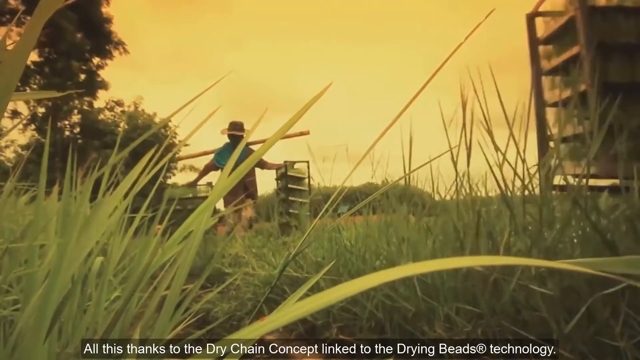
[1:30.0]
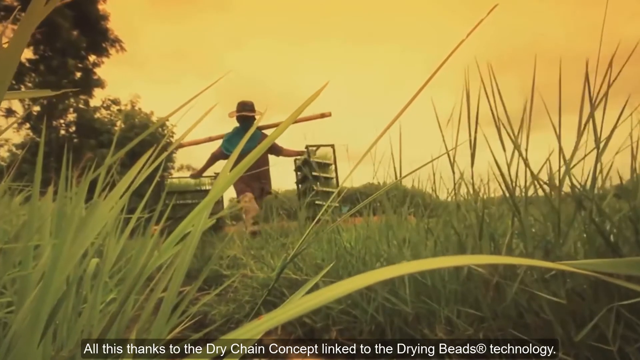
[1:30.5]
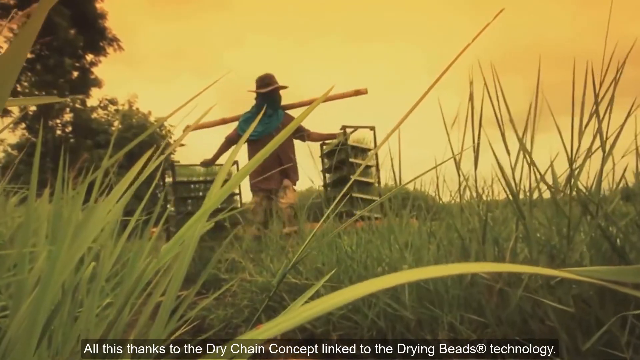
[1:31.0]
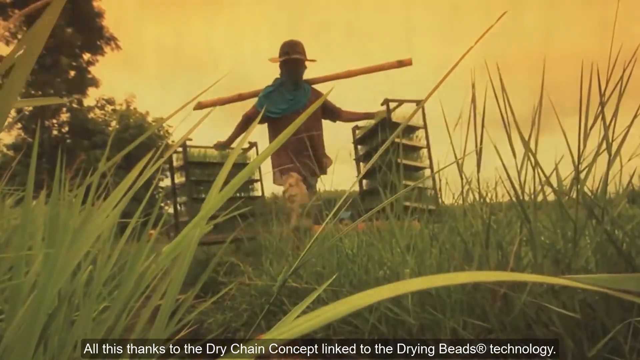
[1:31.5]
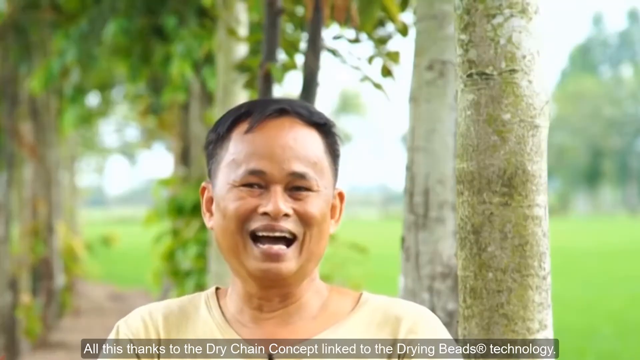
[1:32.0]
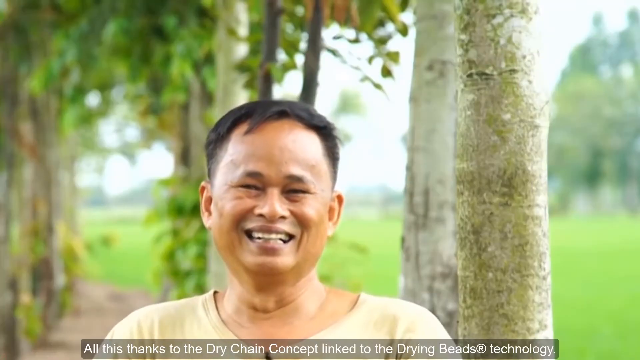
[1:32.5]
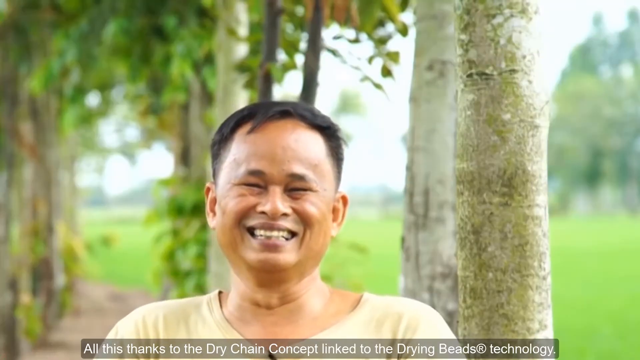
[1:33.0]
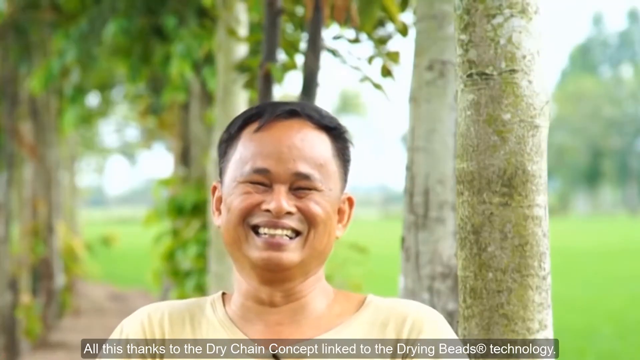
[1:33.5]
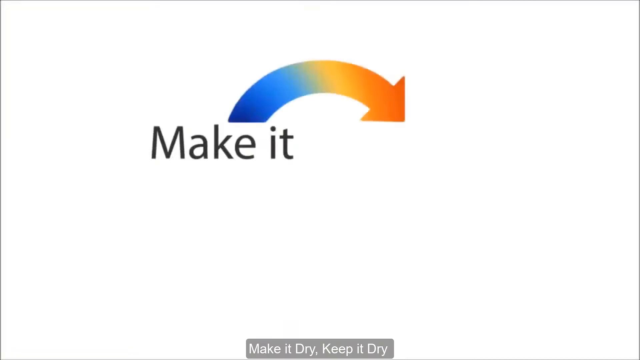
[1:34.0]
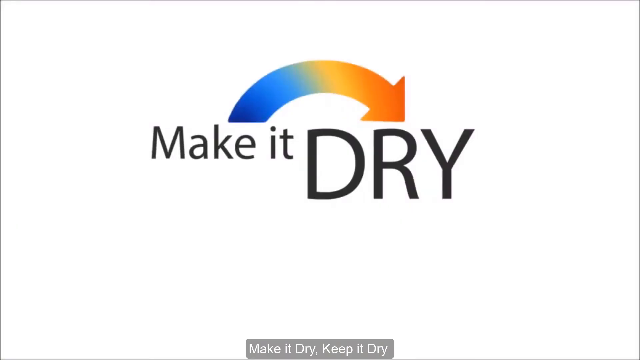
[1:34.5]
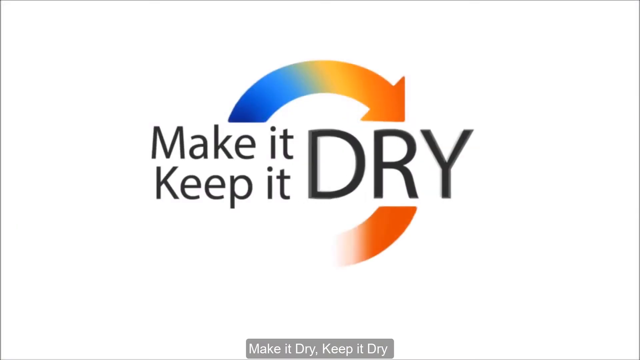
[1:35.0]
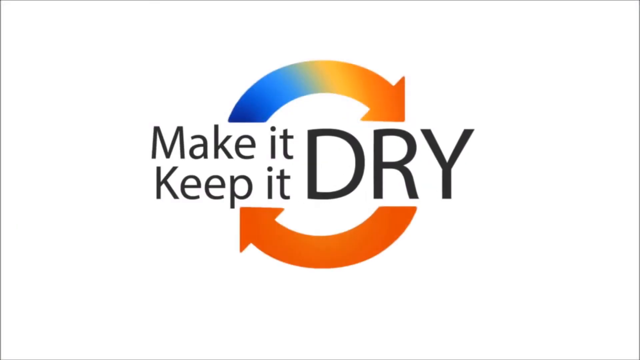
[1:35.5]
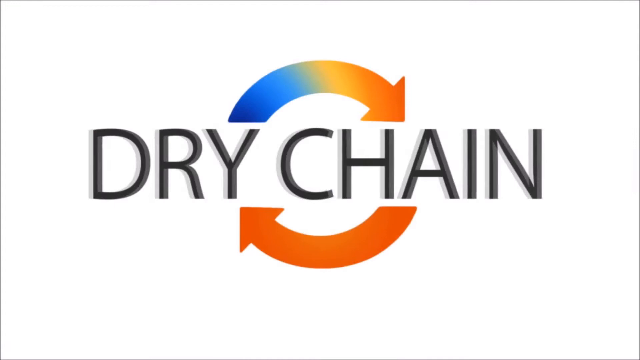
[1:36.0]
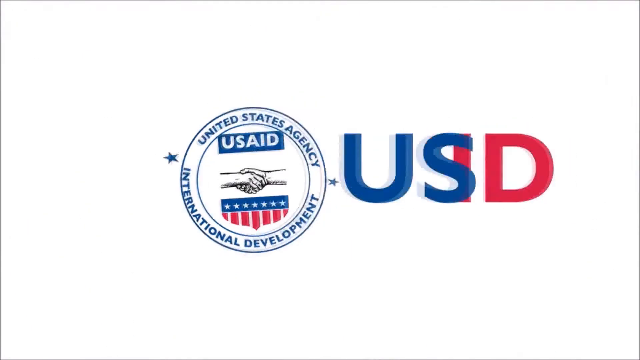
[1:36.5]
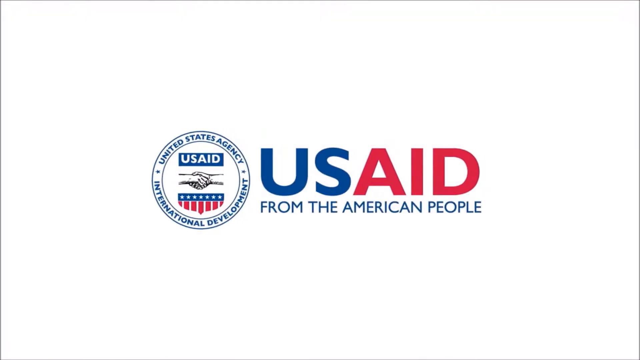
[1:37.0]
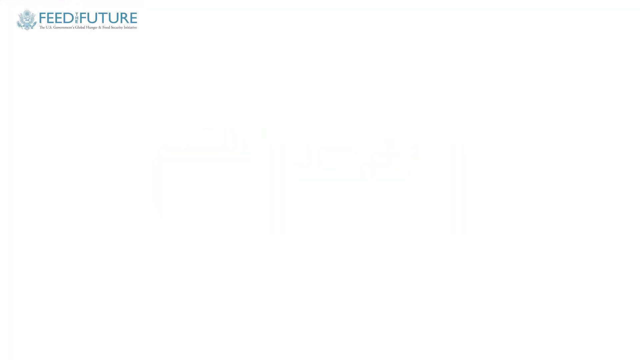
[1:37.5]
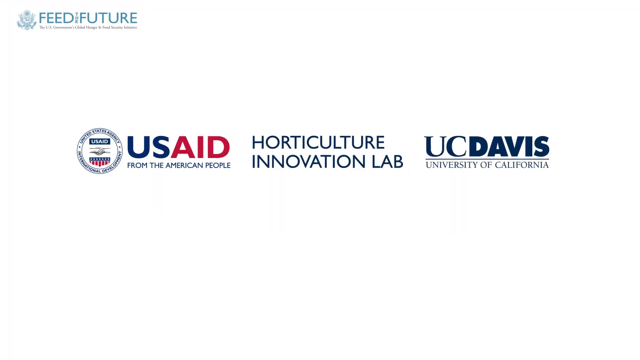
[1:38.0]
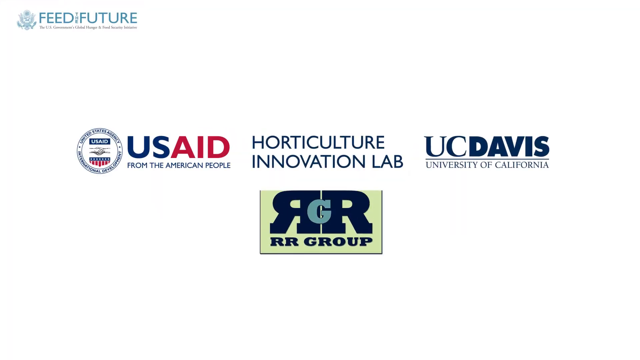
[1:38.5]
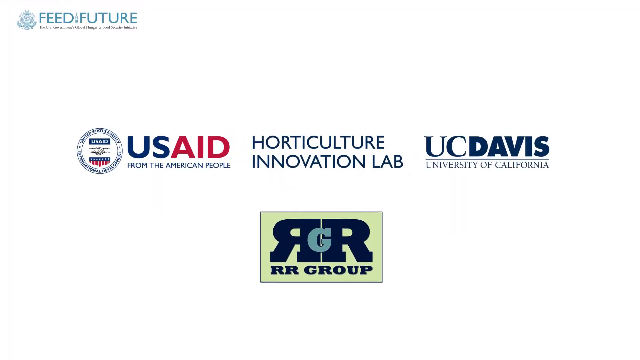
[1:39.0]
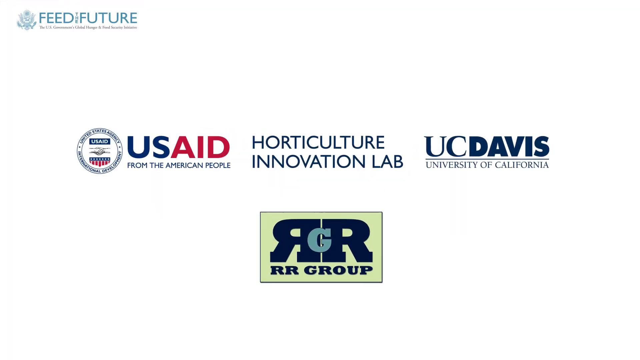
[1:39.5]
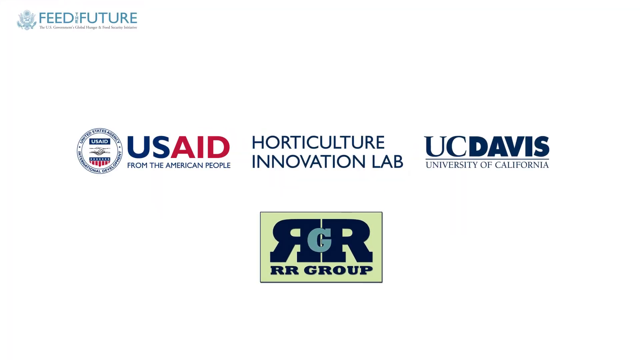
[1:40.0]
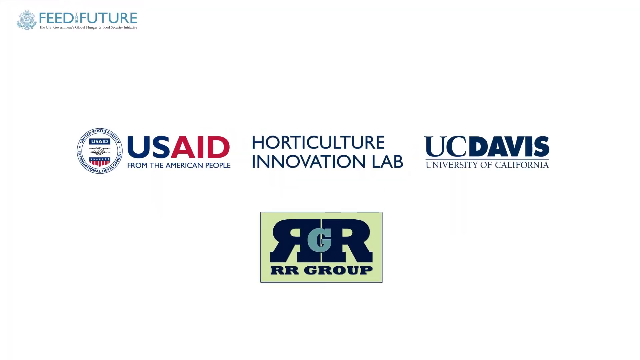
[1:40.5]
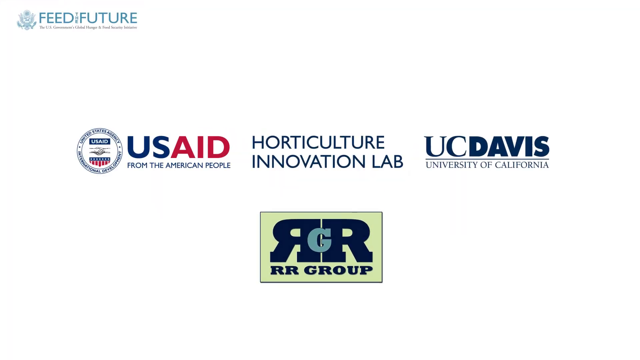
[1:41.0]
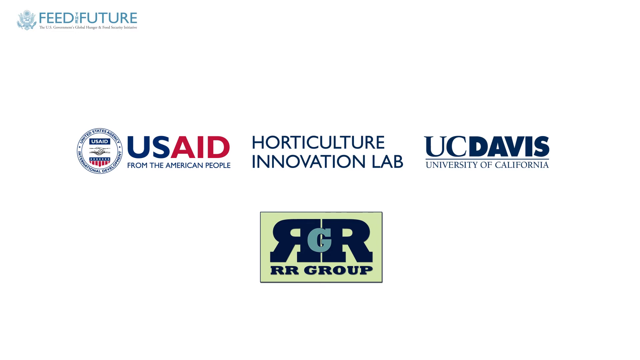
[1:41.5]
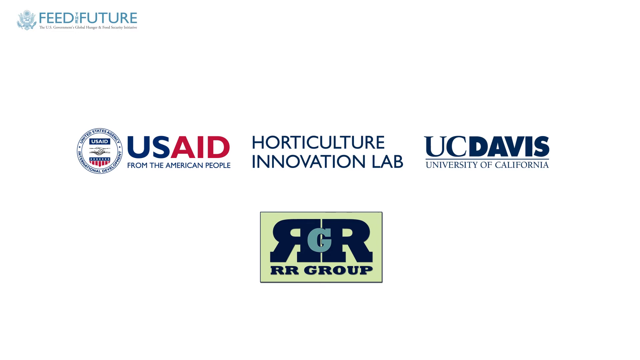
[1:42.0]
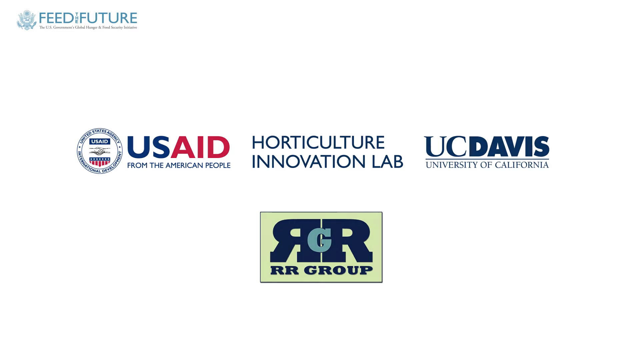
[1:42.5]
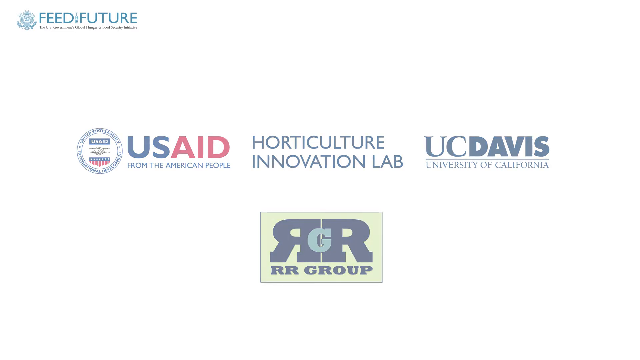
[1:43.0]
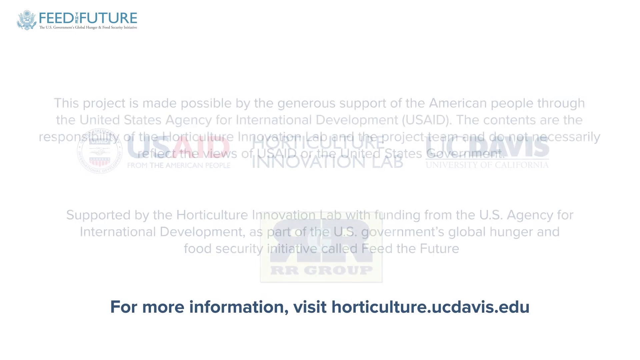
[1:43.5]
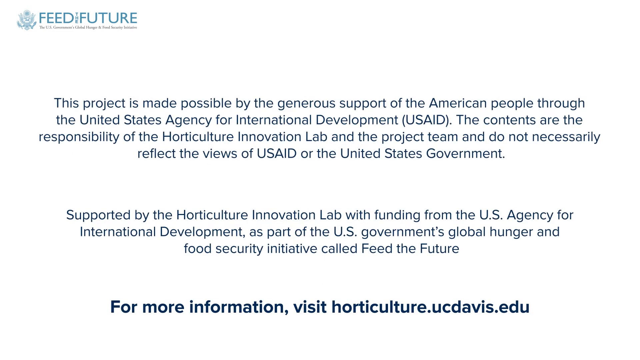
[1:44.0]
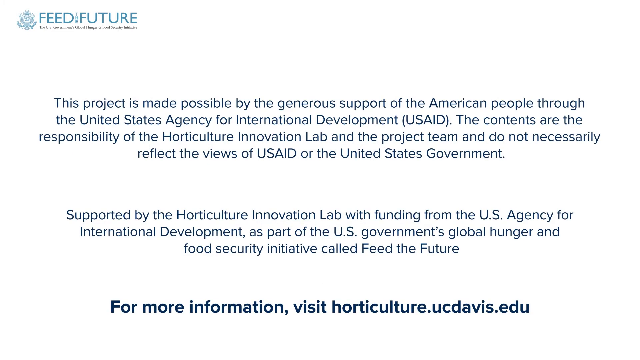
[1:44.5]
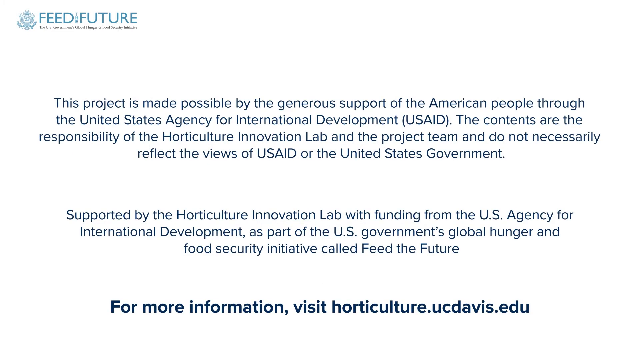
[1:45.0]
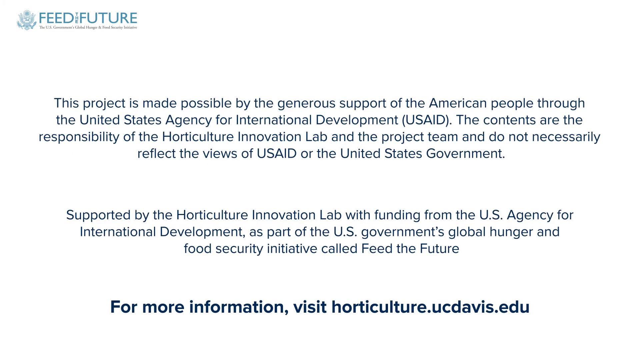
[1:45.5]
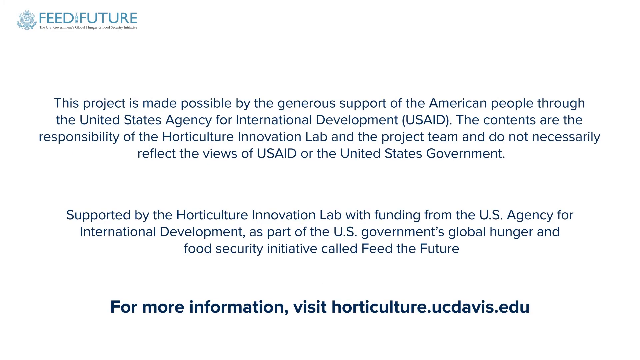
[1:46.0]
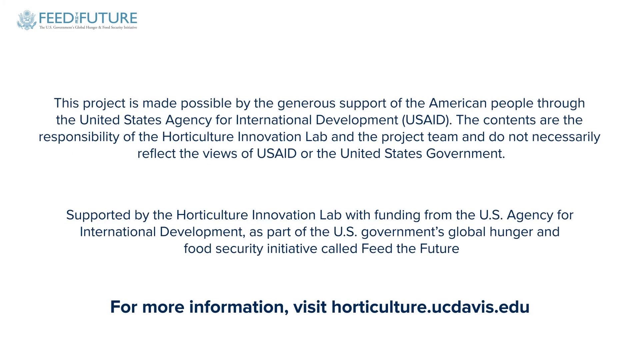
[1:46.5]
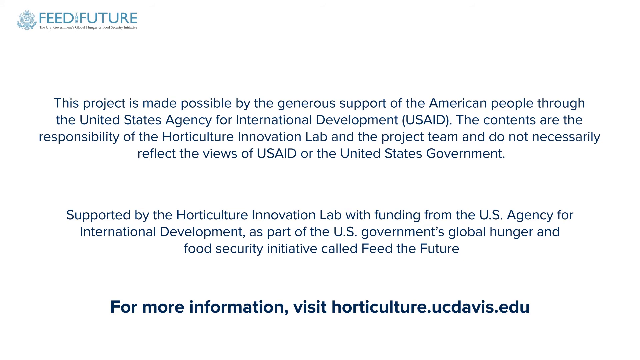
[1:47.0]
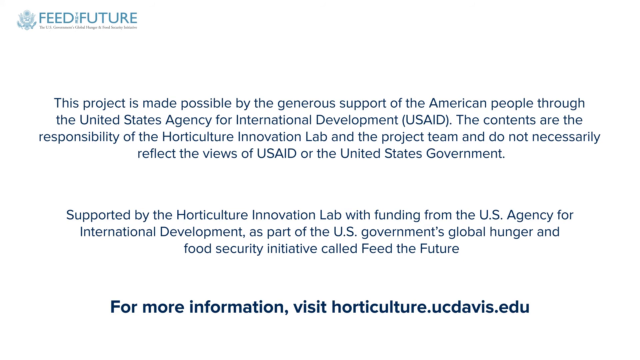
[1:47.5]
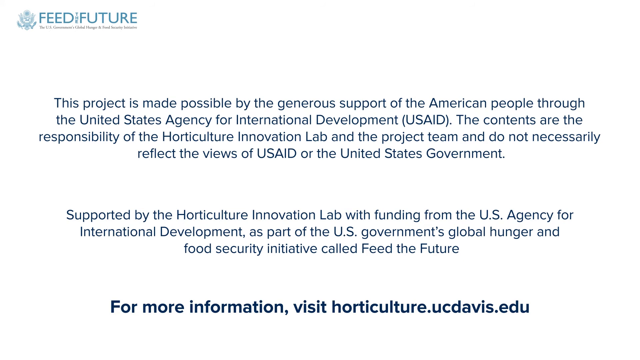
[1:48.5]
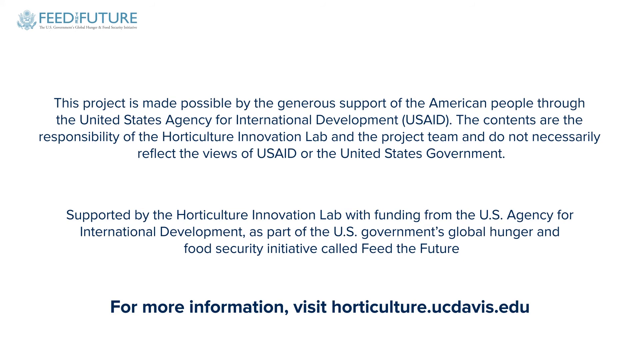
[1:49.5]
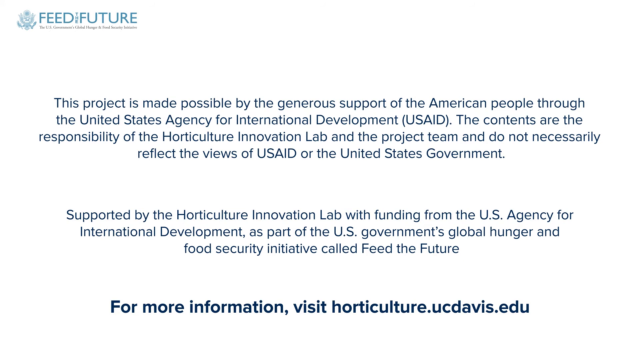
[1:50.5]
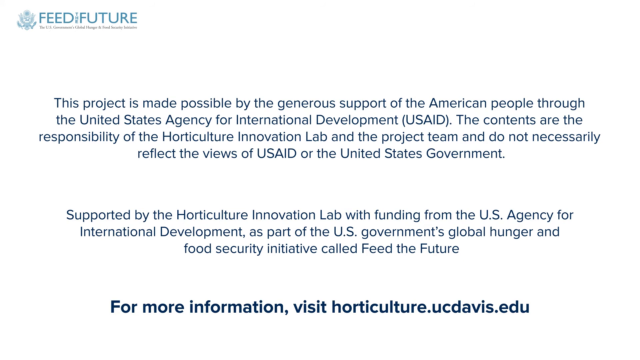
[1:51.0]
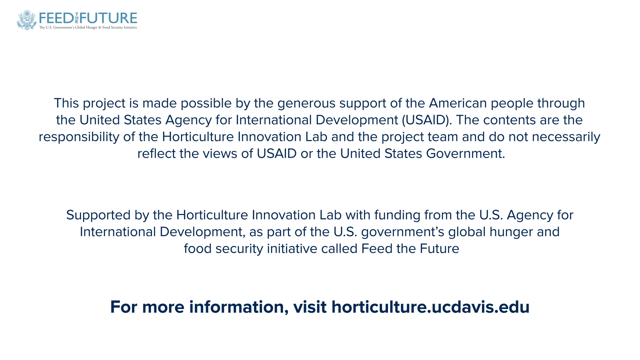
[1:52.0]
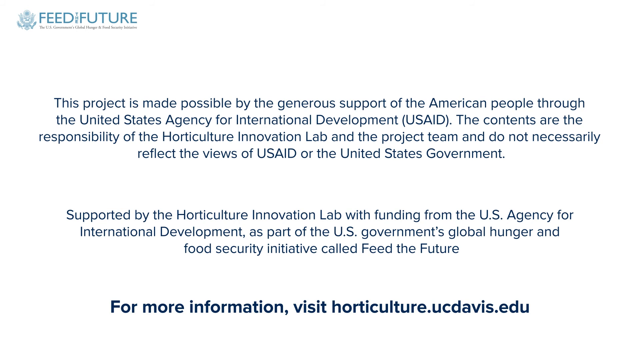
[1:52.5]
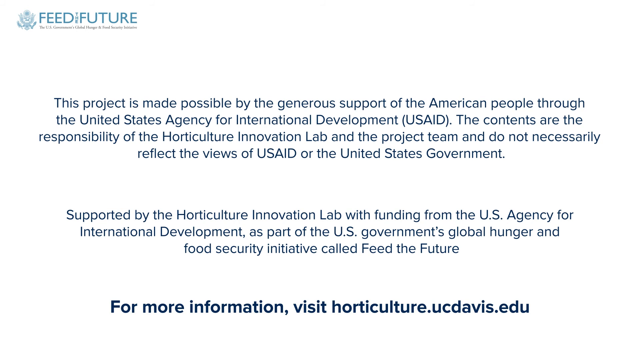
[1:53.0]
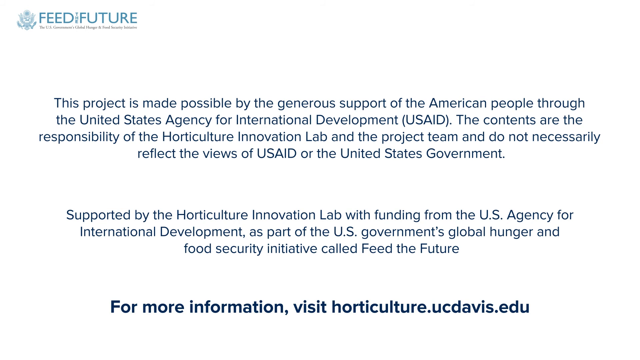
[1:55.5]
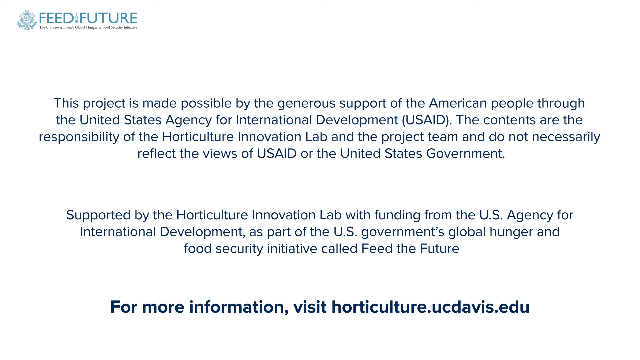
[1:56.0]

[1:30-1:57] An outdoor low camera shot from the grass shows what looks like a rural farmer with a sort of pole across his shoulders, carrying some kind of unidentified contraptions hanging from each end of it, transporting things. A quick video shows a head shot of someone smiling toward the camera who looks like a local from Bangladesh. An animated screen with a white background and some wording reads "Make it dry, Keep it dry", with a circular logo with arrows that says "Dry Chain". The USAID logo appears again, followed by more closing panels, including the USAID logo and a panel with UC Davis. Another page is mostly small-print blue text, with a for-more-information email address from ucdavis.edu at the bottom and, in the upper left corner, a blue Feed the Future logo.